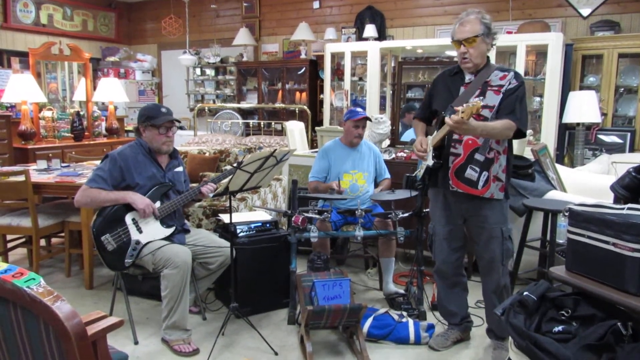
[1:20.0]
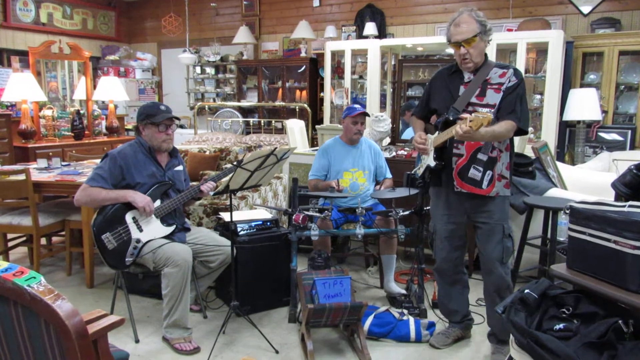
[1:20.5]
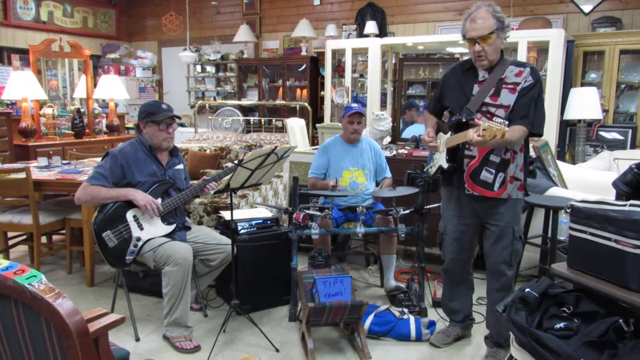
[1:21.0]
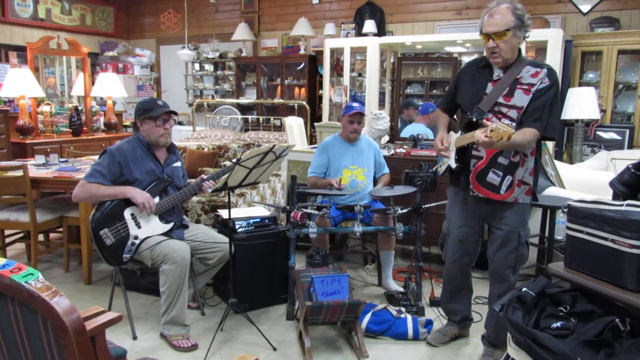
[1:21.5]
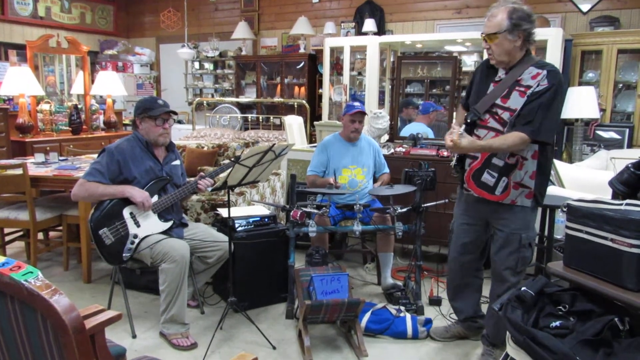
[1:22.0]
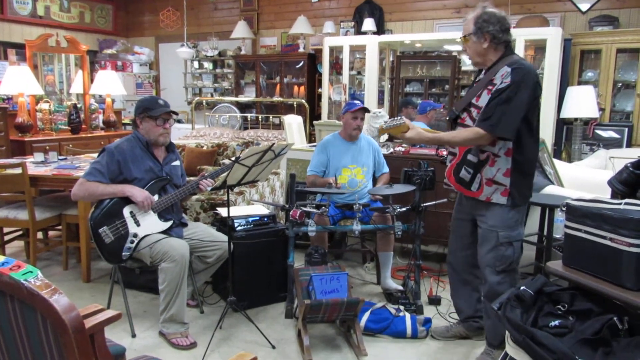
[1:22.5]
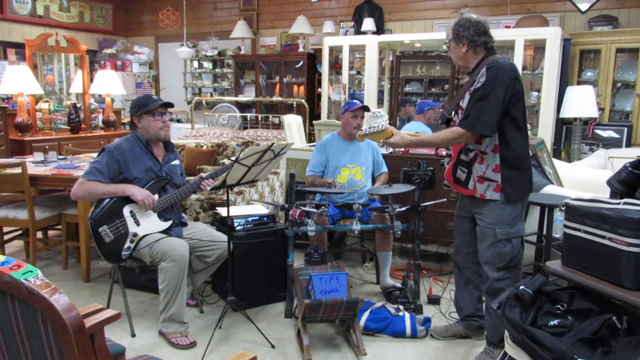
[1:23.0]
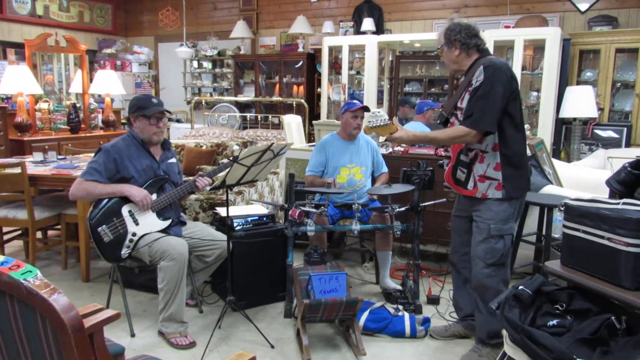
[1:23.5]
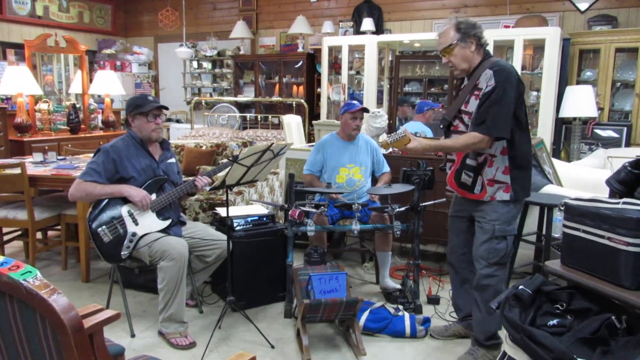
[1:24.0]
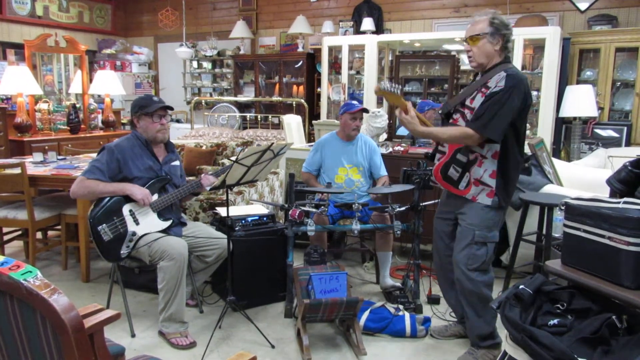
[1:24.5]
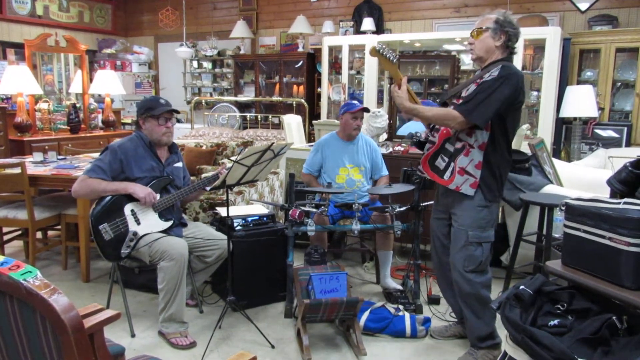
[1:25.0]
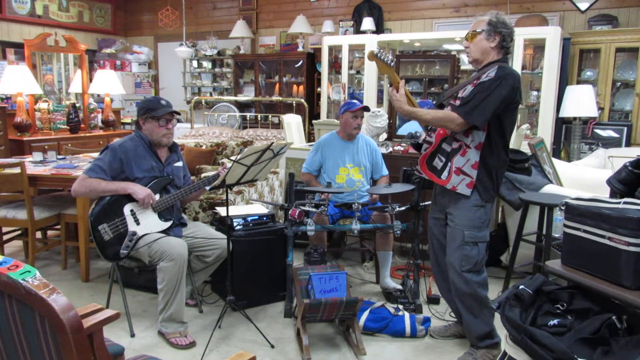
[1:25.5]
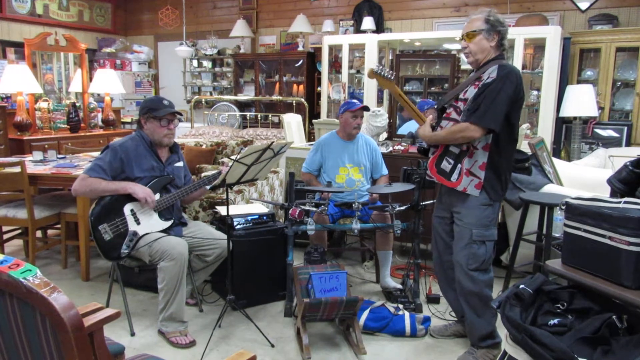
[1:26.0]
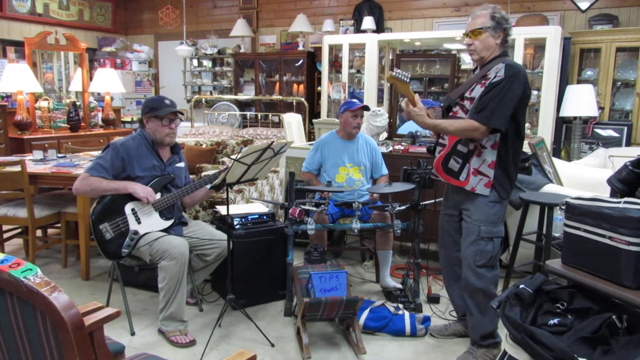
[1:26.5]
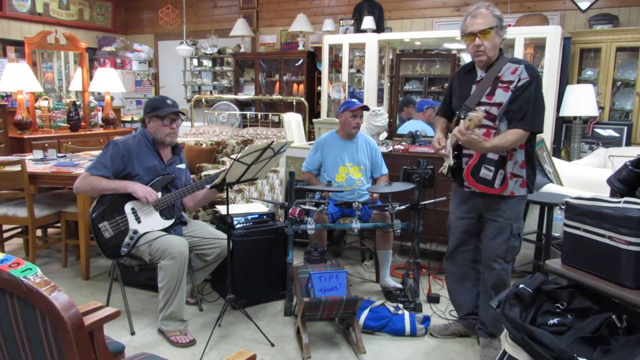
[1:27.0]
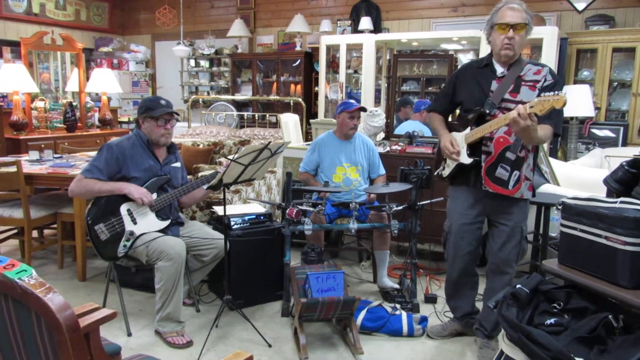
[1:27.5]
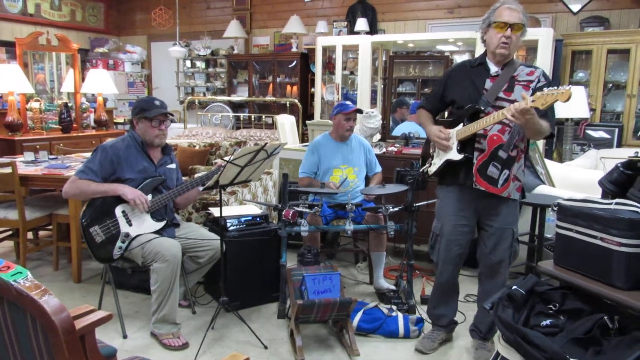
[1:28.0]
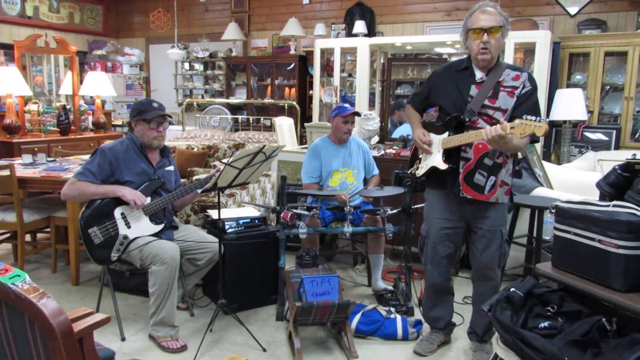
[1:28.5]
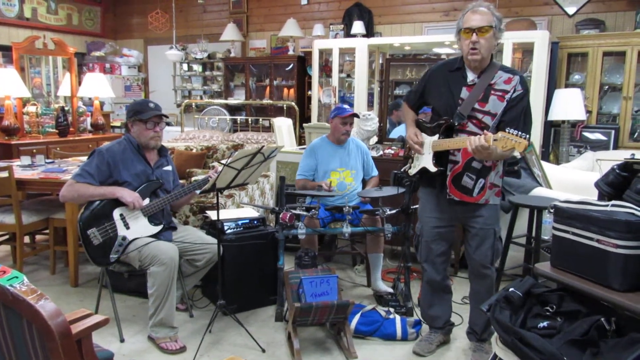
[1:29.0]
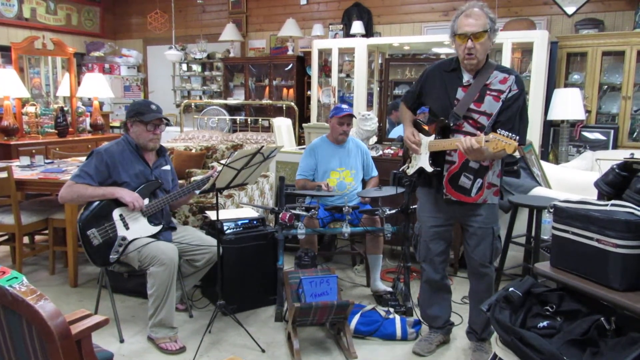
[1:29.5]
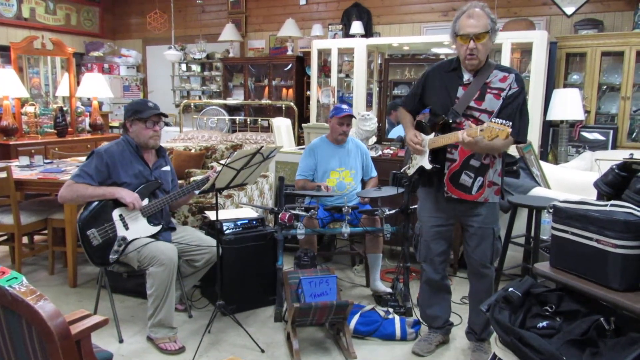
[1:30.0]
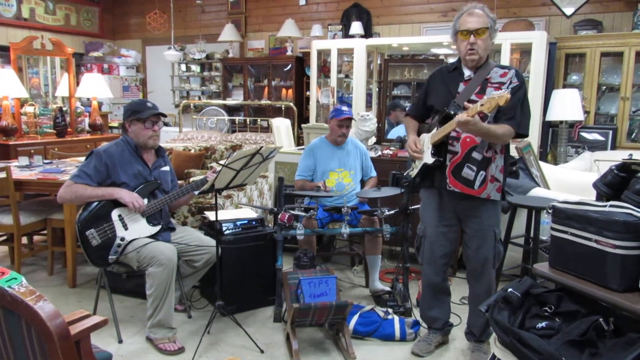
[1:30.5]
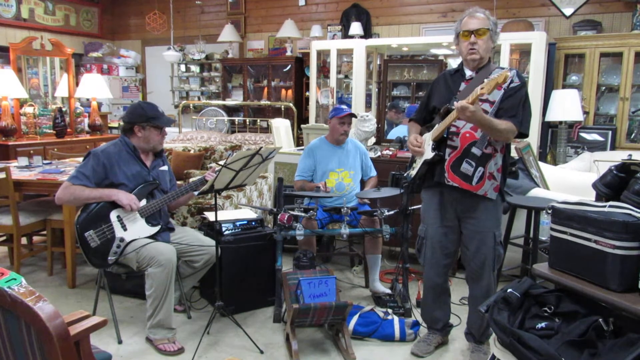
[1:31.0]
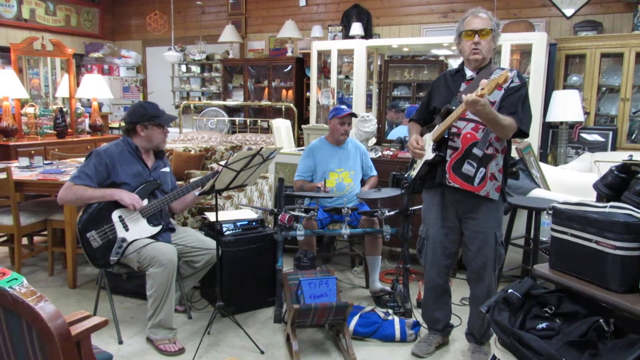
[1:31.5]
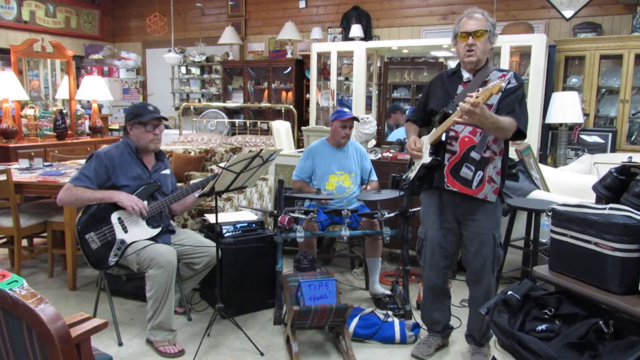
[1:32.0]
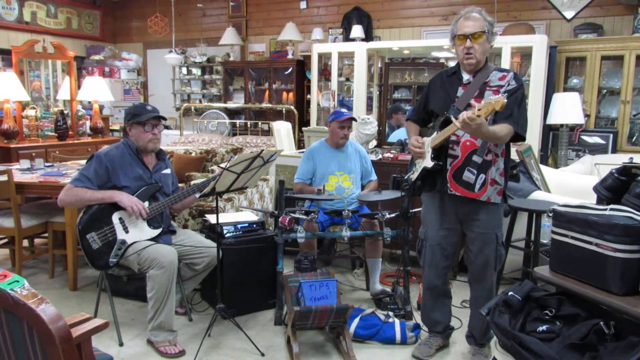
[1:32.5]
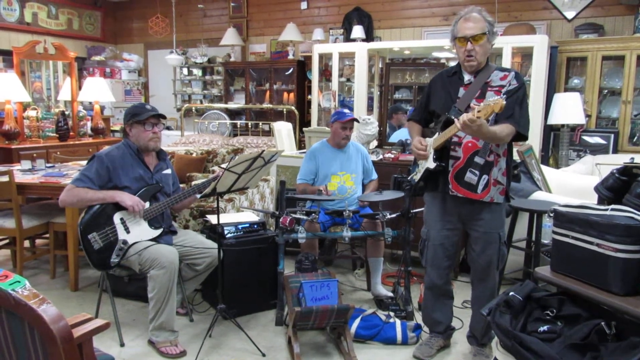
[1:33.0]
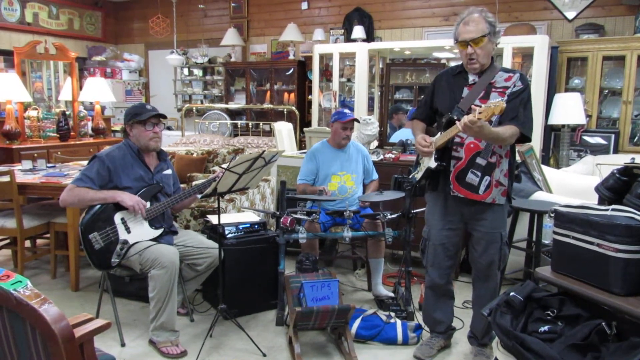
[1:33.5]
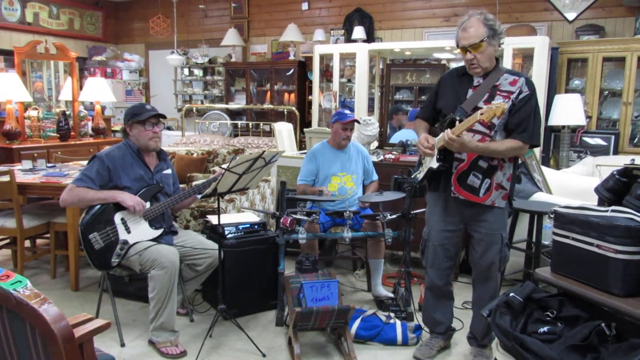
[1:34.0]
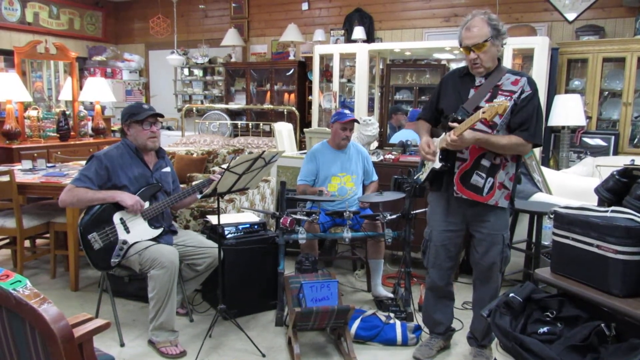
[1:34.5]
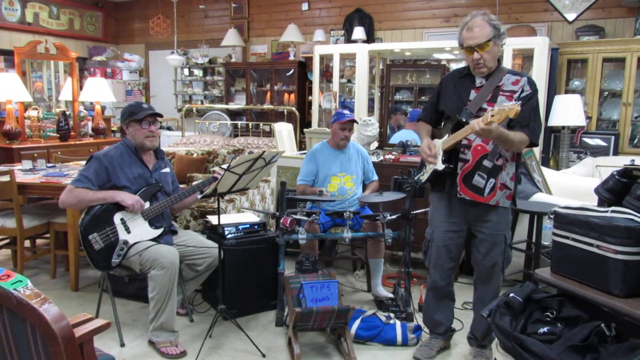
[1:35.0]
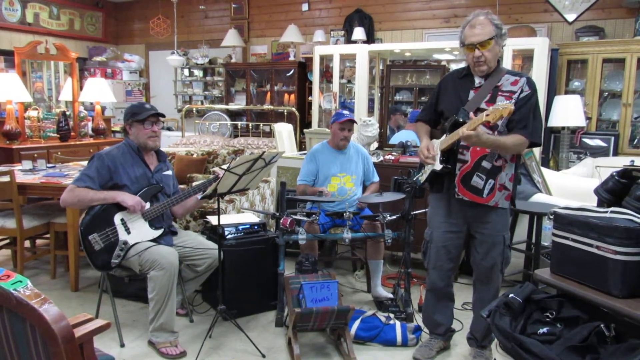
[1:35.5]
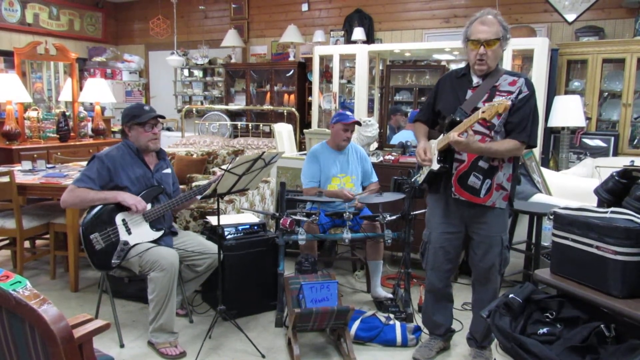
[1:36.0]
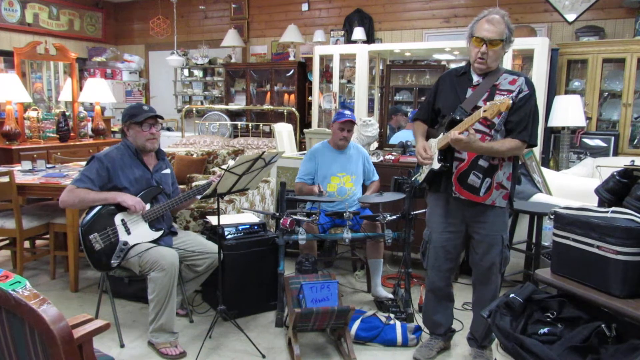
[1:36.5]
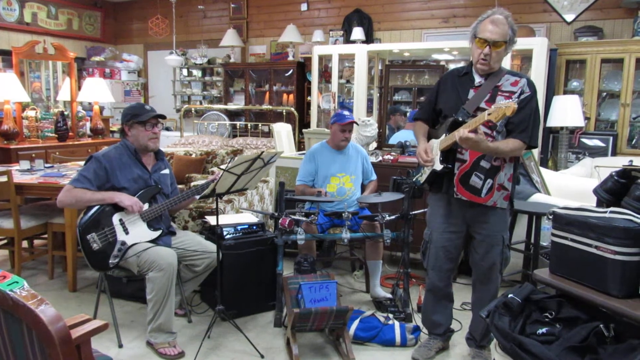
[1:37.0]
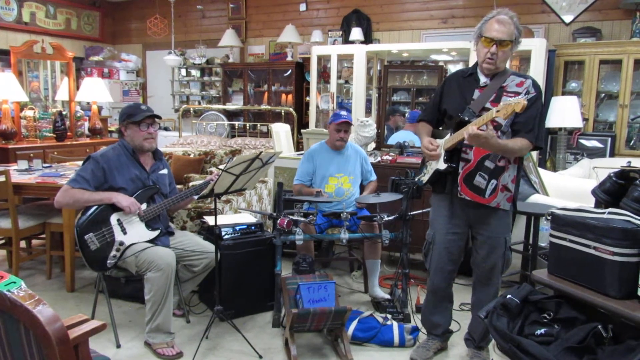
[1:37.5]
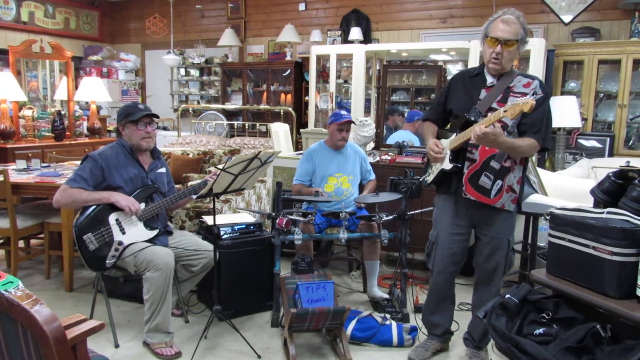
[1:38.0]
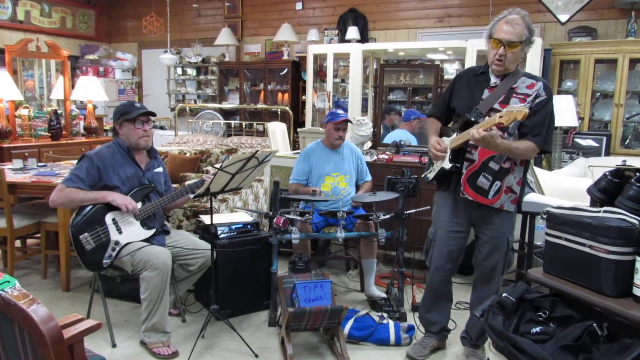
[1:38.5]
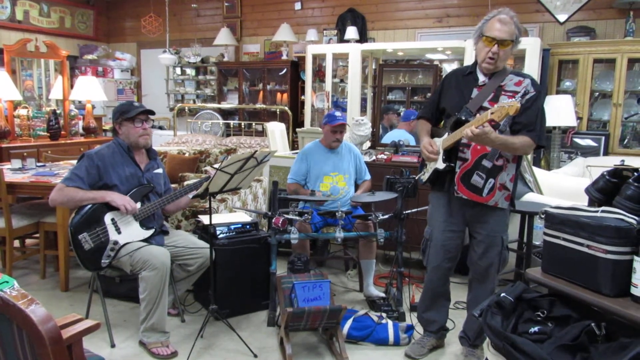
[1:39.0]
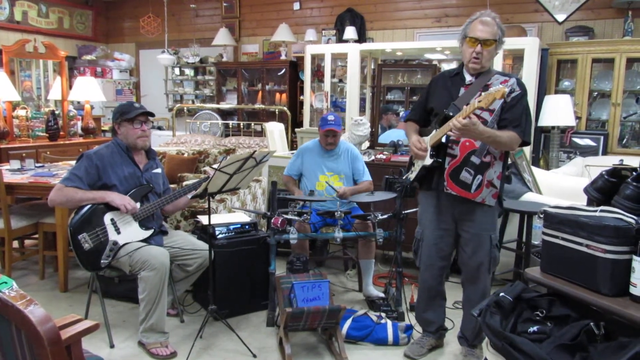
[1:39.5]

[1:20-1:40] Around the middle of the practice session, the guitarist is jamming, and the tip jar is on the floor. The drummer, playing with no shoes, watches as the guitarist turns to him; he might be looking at notes. The lead guitarist, in yellow glasses, is really getting into it now, and the bass player is looking at his notes while playing. In the background are lots of lamps, about six or seven, the big white cabinet, a tan cabinet to the right, a dark cabinet to the left of the white cabinet, and a dresser to the very far left with two lamps on it. The floor is cluttered, and there is a brown table like a dinner table. Something black, unidentified, is on top of the white cabinet. The place could be a bar or a thrift store where they are practicing.